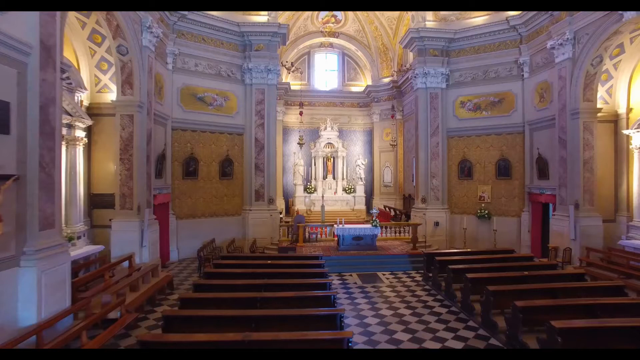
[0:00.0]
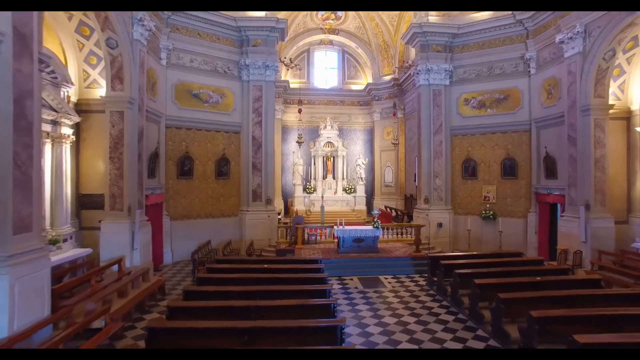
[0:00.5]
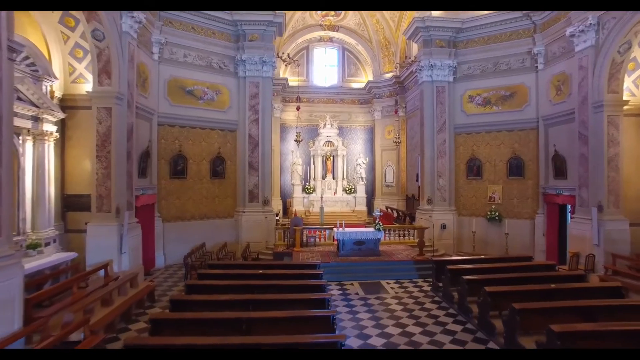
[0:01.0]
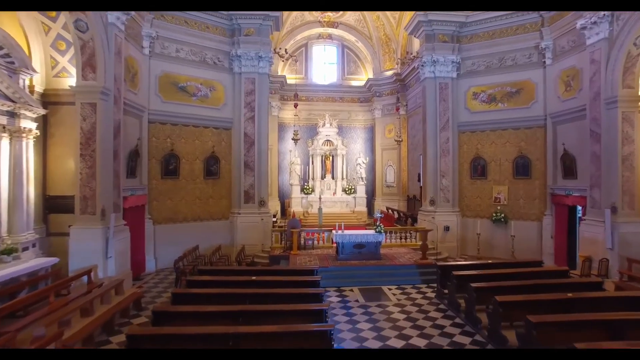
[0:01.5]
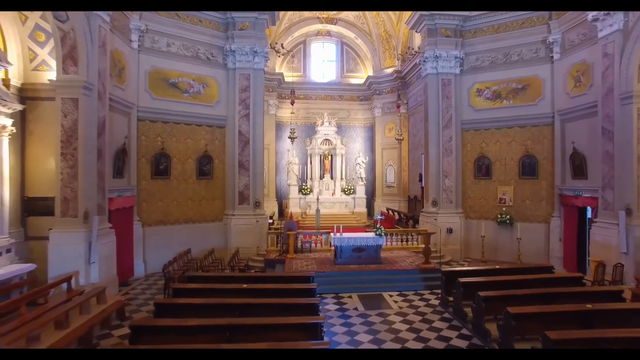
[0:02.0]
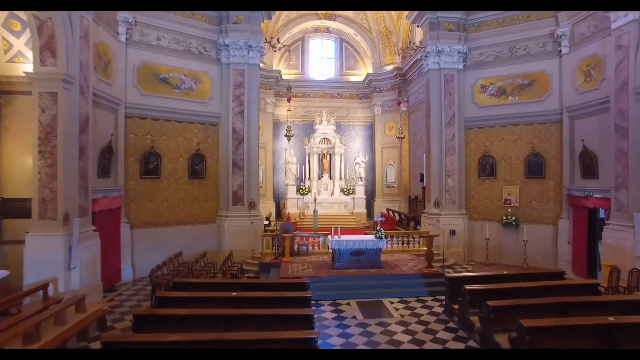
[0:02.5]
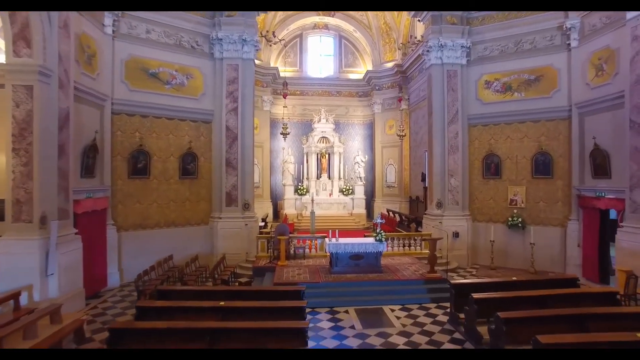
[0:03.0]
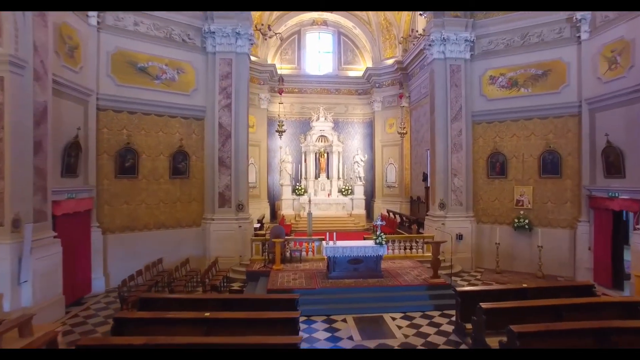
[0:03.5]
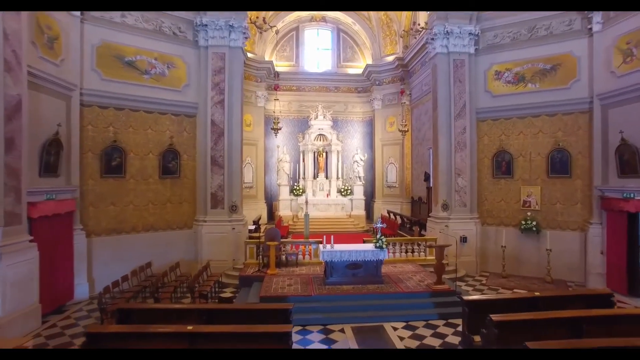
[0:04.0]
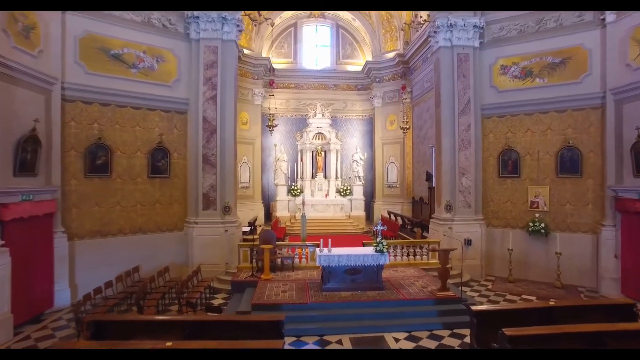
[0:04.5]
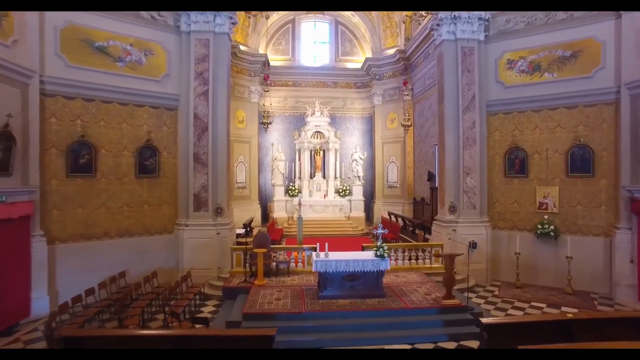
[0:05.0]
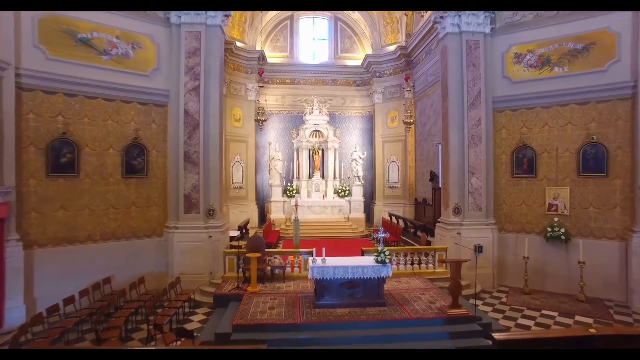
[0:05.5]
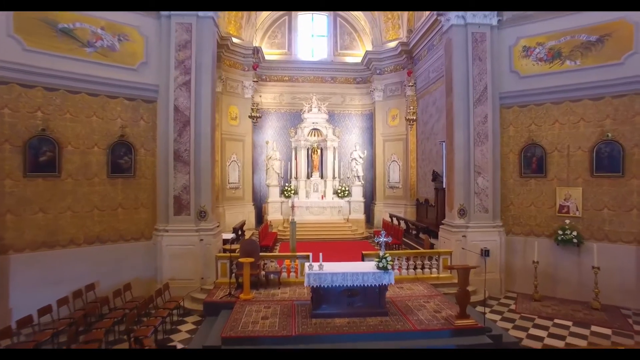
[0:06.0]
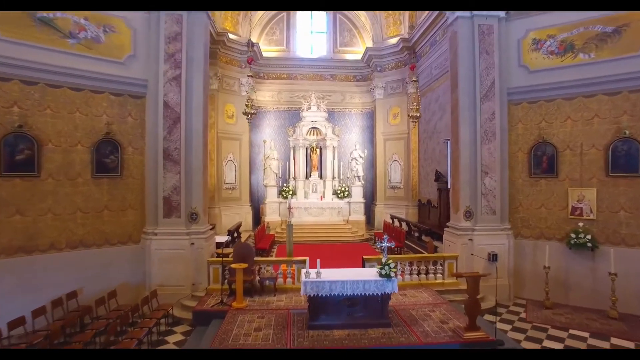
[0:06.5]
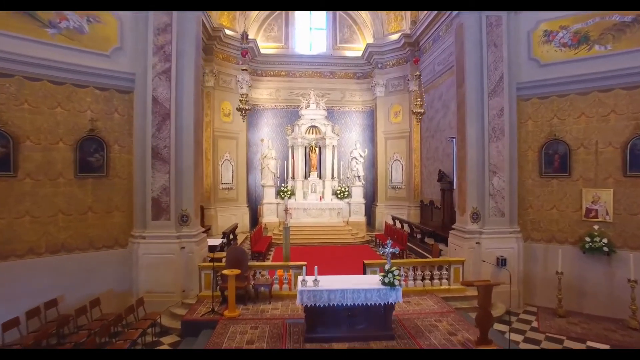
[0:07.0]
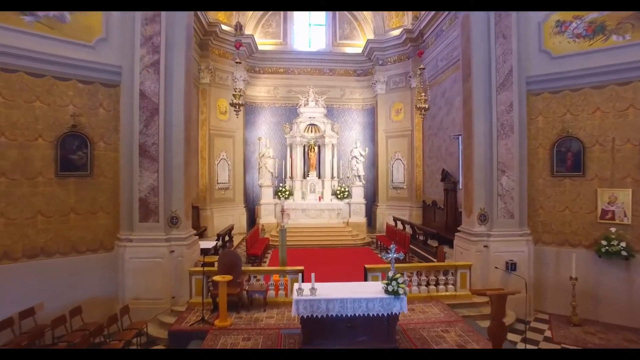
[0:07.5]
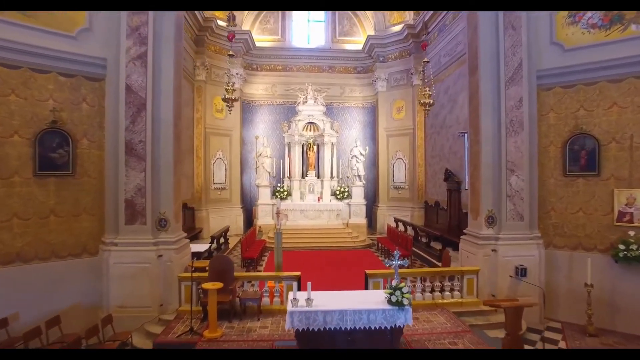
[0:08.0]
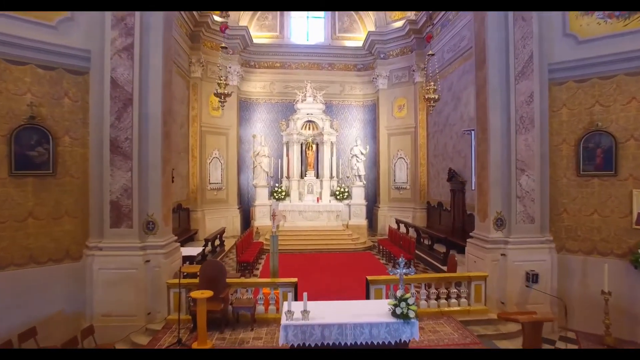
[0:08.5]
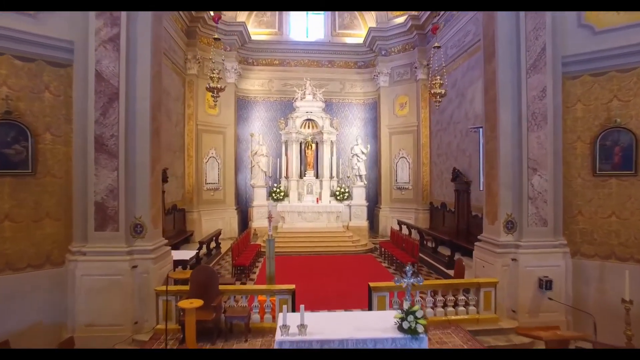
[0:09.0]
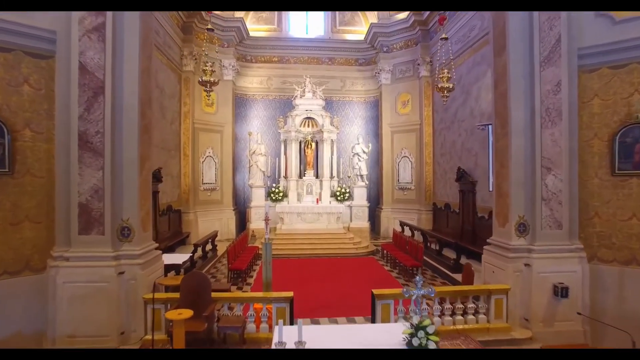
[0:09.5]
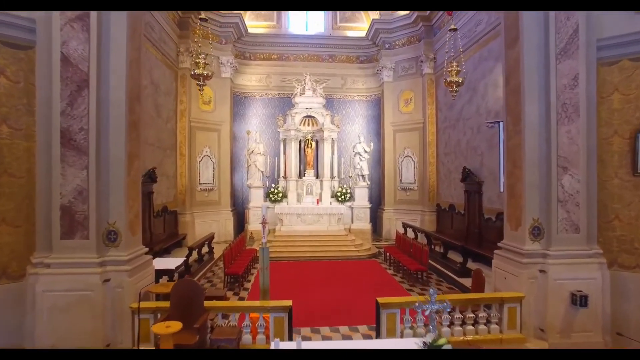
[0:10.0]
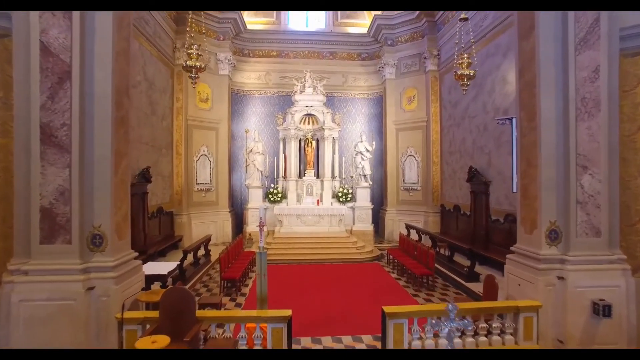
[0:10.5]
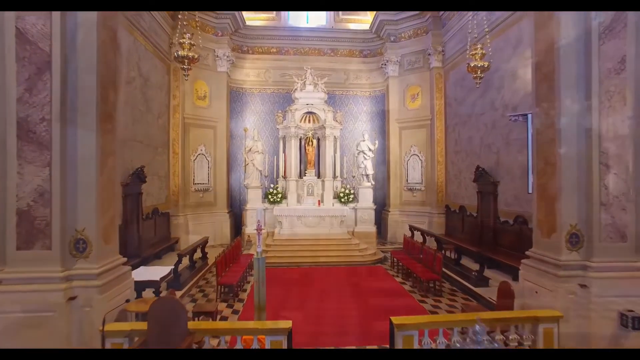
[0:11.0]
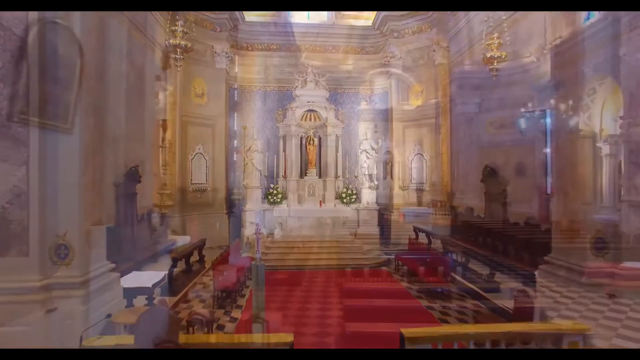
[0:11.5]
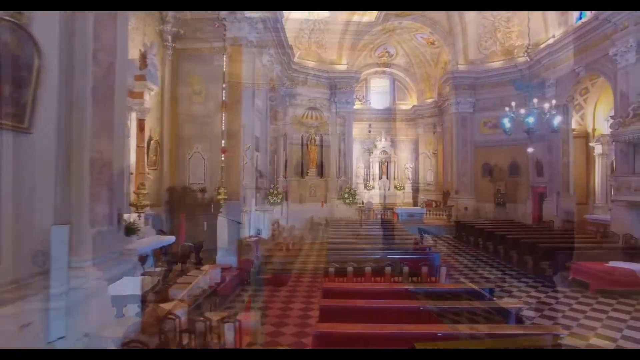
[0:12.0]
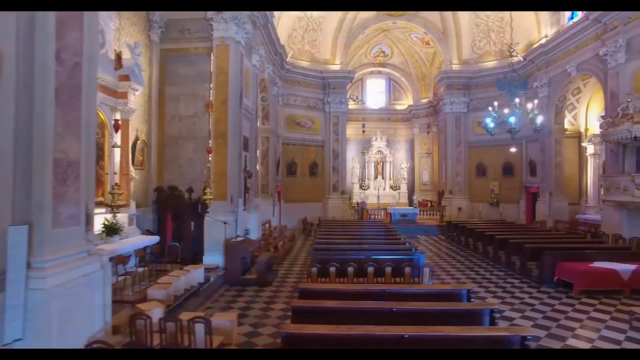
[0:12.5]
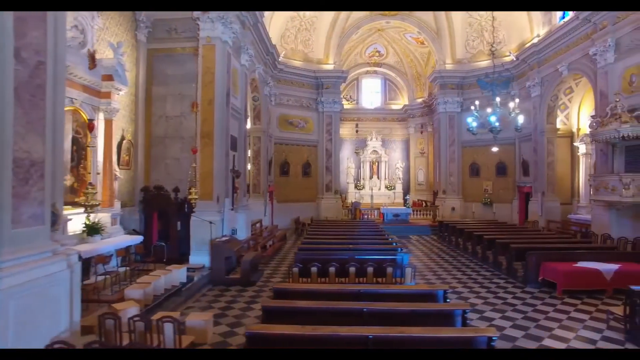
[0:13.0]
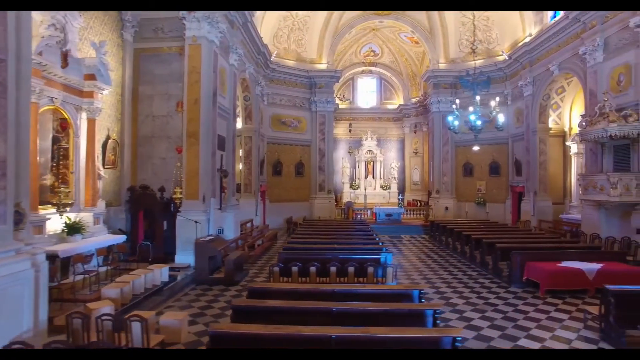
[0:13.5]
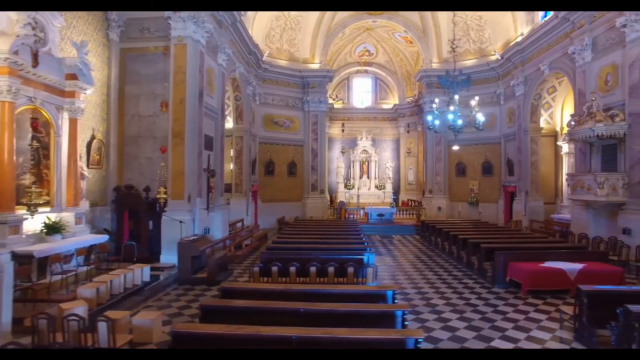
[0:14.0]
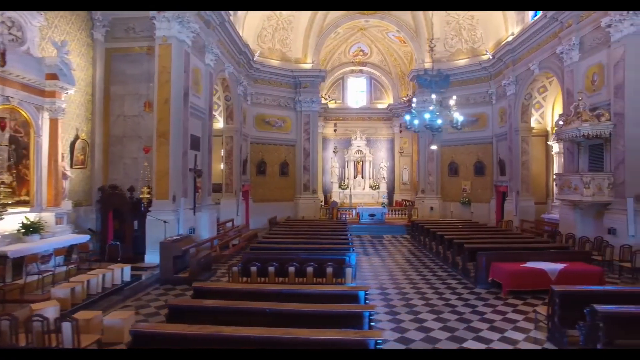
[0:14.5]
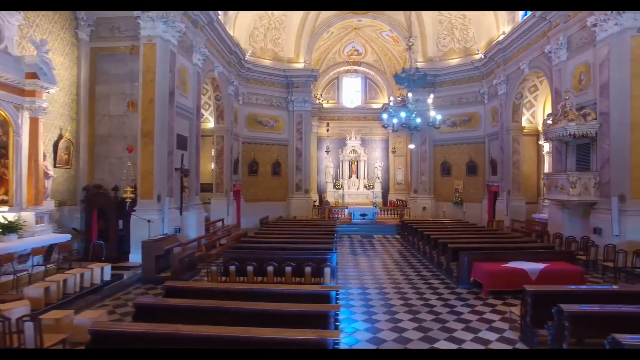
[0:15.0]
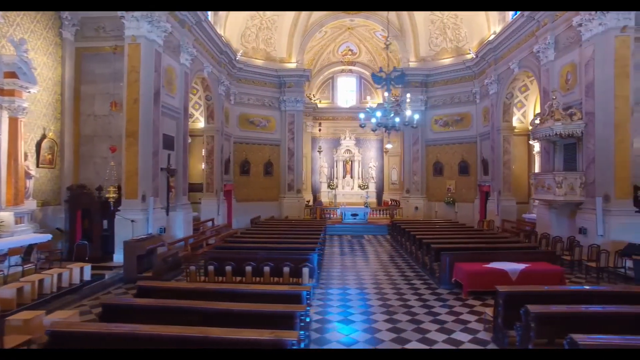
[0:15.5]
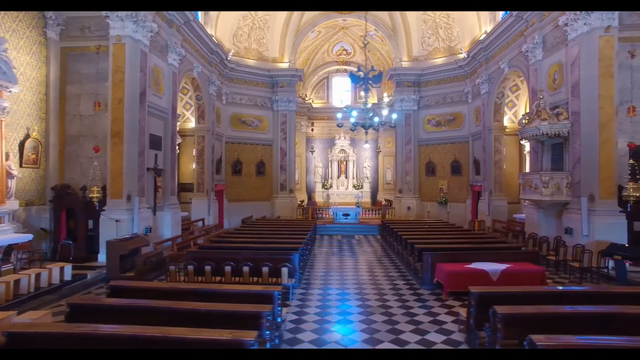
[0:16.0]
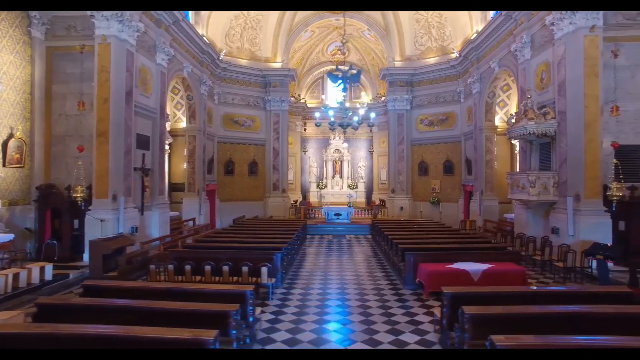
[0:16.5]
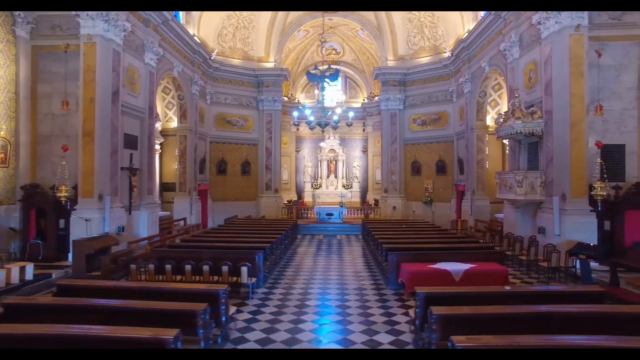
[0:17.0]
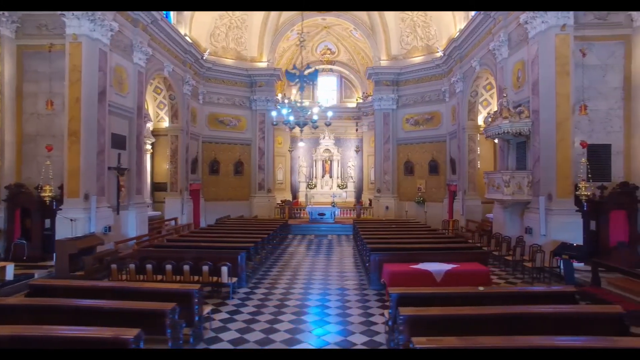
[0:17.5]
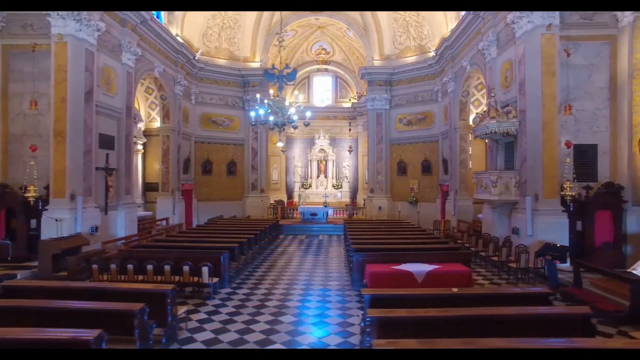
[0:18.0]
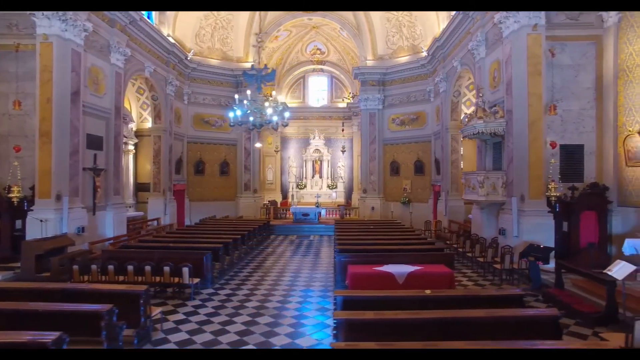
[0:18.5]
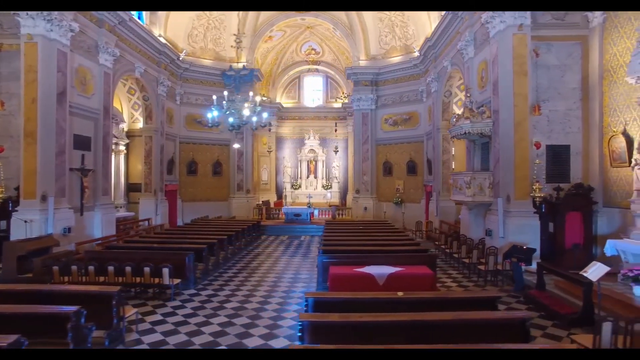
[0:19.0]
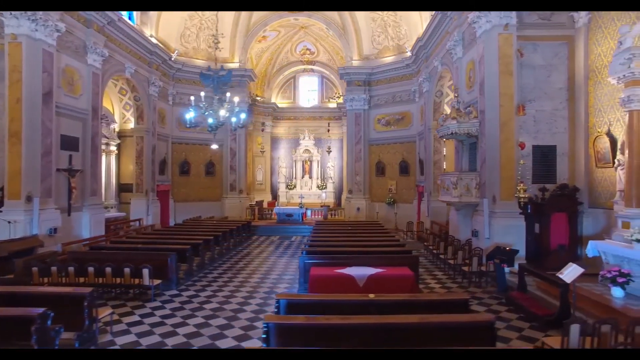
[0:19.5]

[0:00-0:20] The video shows the interior of a church, with the camera steadily zooming forward toward the altar, then back out and panning around. The interior is very highly decorated, coloured in white and pink stone, with tall arches and buttresses covered in intricate patterns. The walls are white and gold, and some pictures hang on them, though what they depict cannot quite be seen. The view looks down the nave, which has a tiled floor of white and black zigzag-patterned tiles and blue carpet at the front leading up to the altar with an intricate altarpiece. Rows of pews are in the foreground. It is possibly a Catholic church with a possibly European feel: round arches and light coming in through high windows.